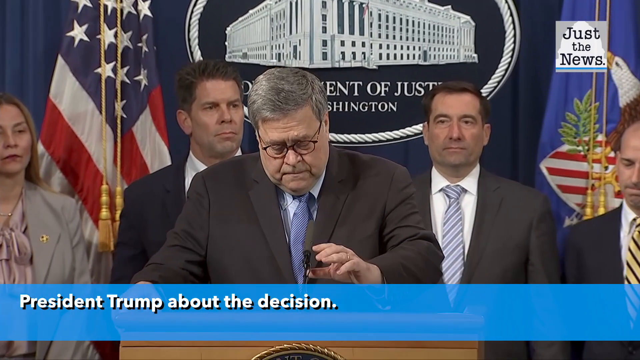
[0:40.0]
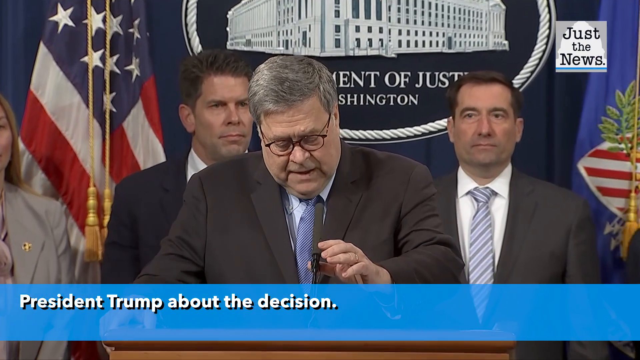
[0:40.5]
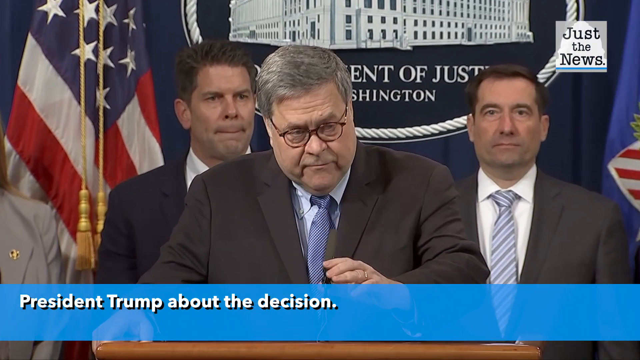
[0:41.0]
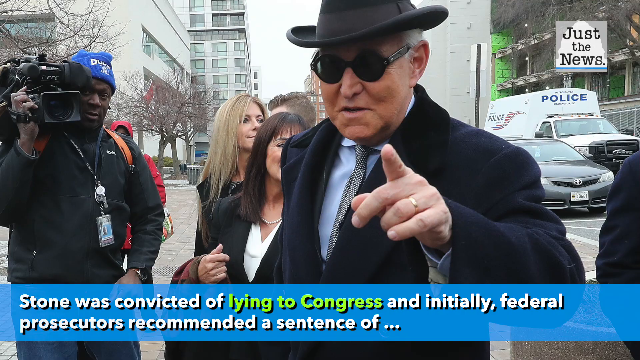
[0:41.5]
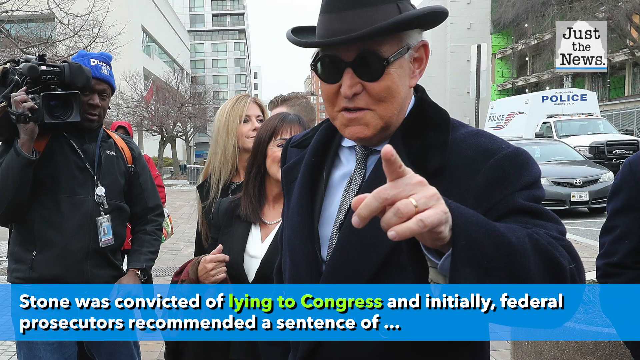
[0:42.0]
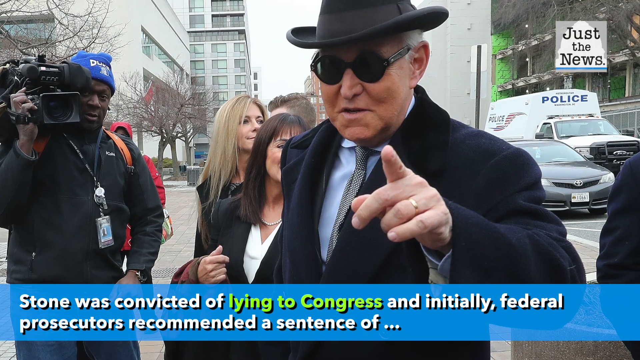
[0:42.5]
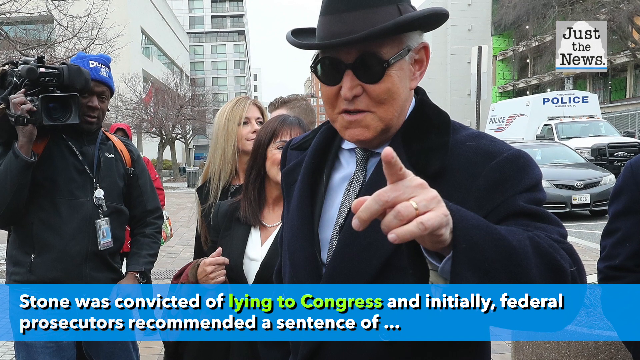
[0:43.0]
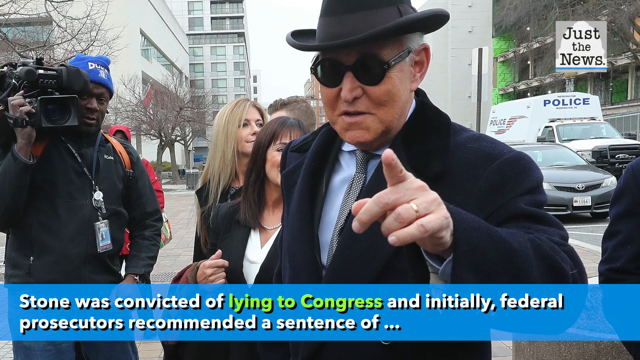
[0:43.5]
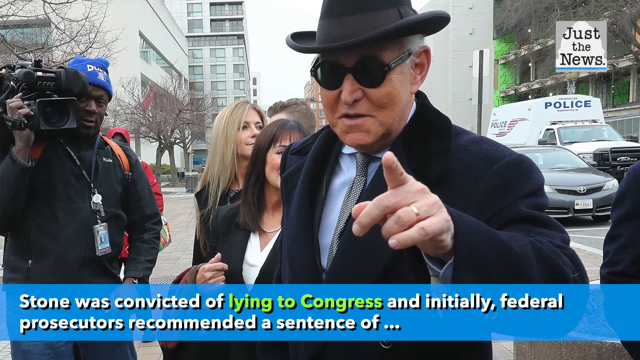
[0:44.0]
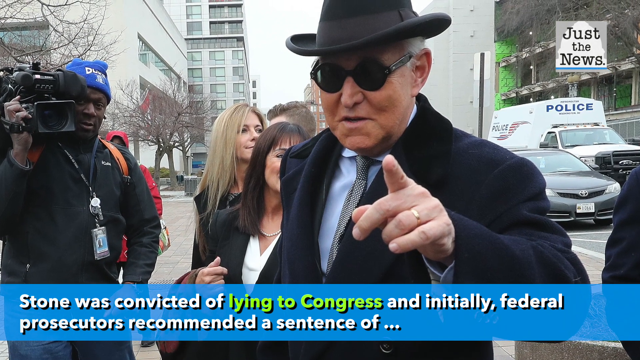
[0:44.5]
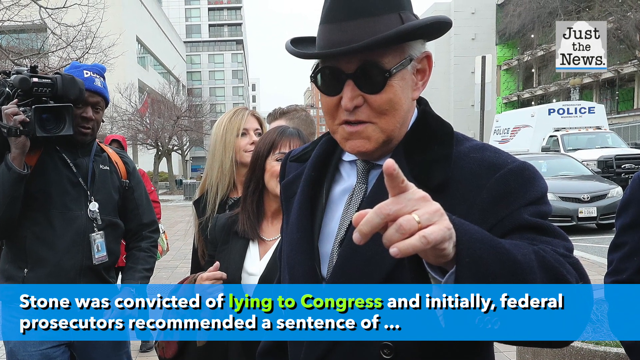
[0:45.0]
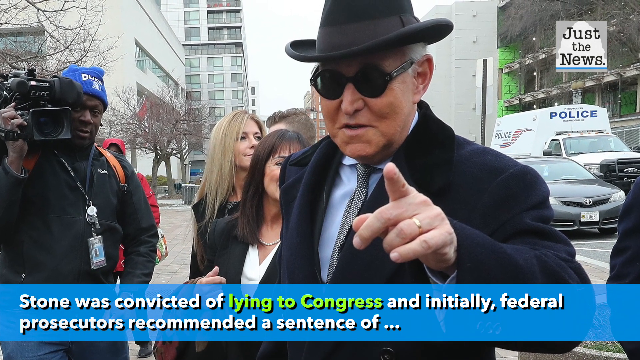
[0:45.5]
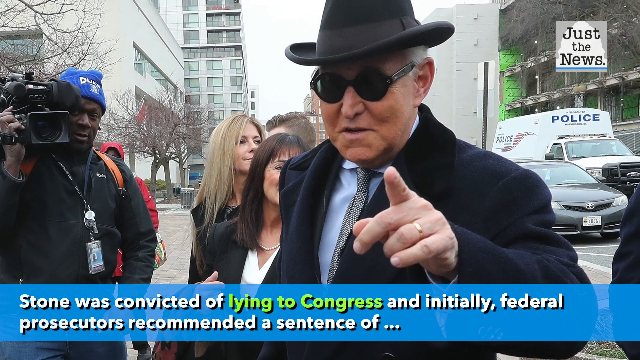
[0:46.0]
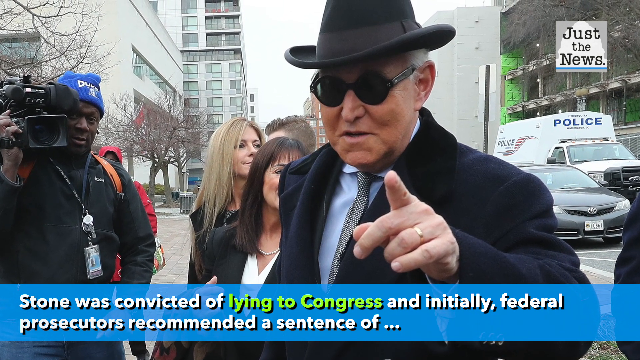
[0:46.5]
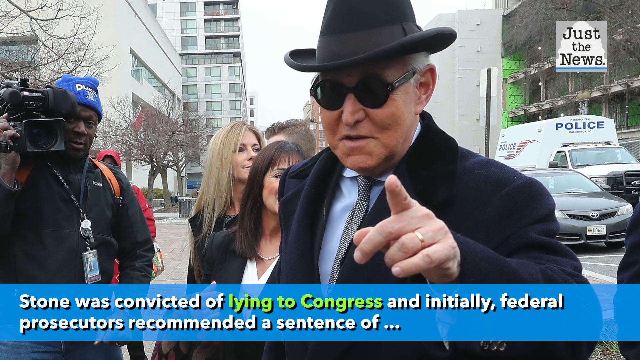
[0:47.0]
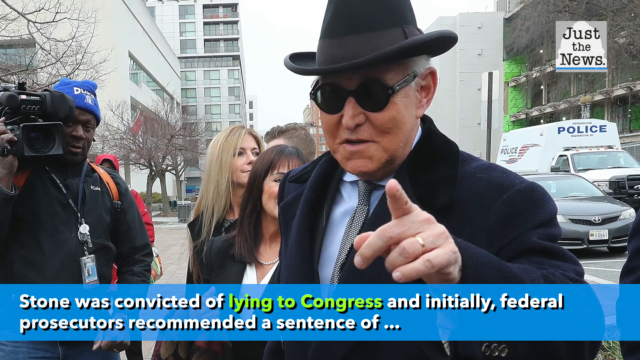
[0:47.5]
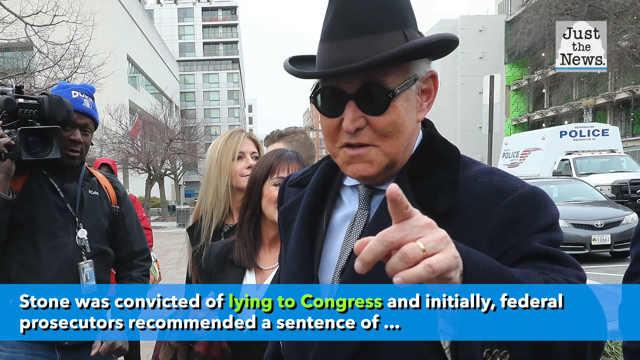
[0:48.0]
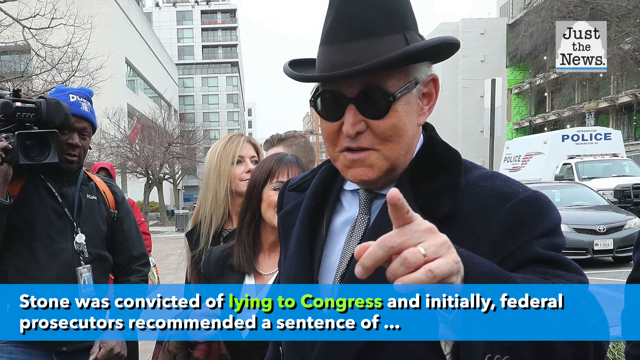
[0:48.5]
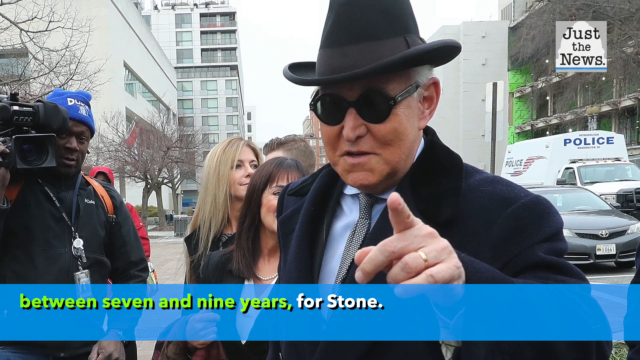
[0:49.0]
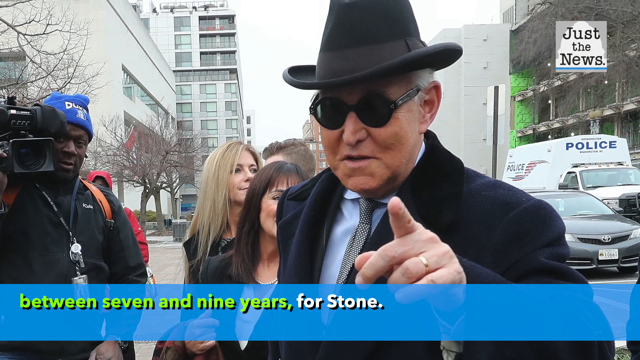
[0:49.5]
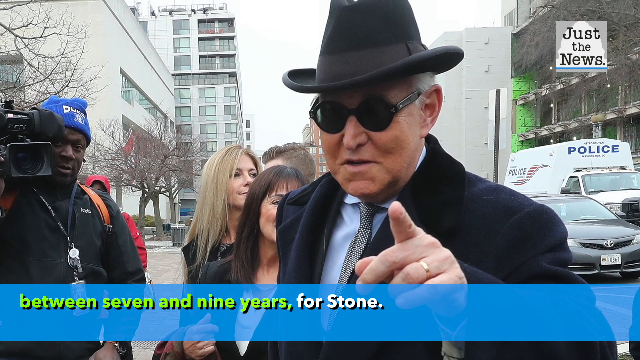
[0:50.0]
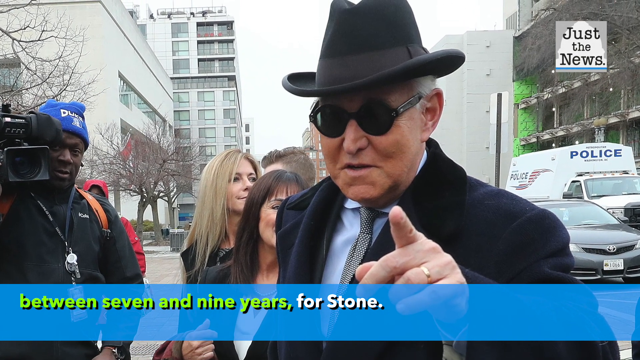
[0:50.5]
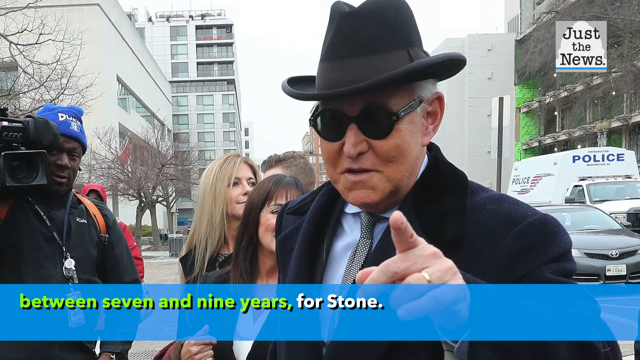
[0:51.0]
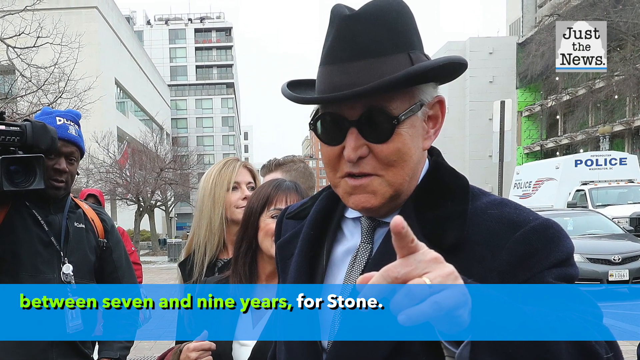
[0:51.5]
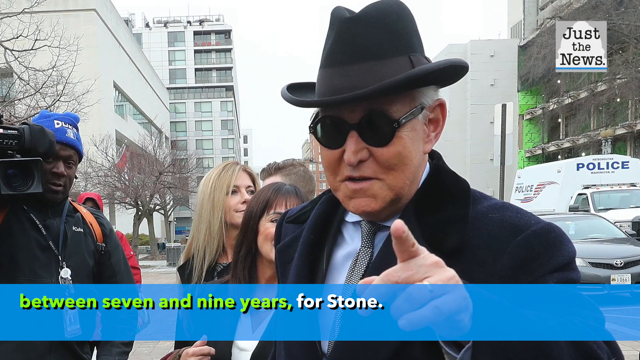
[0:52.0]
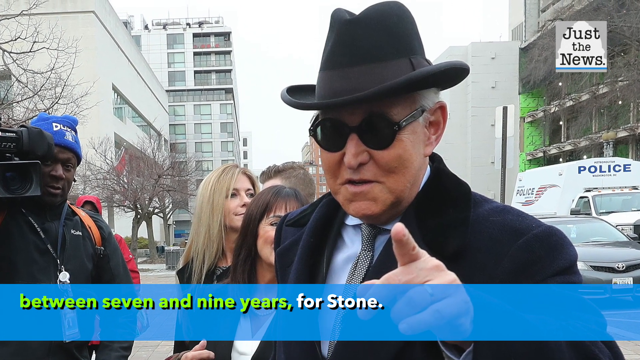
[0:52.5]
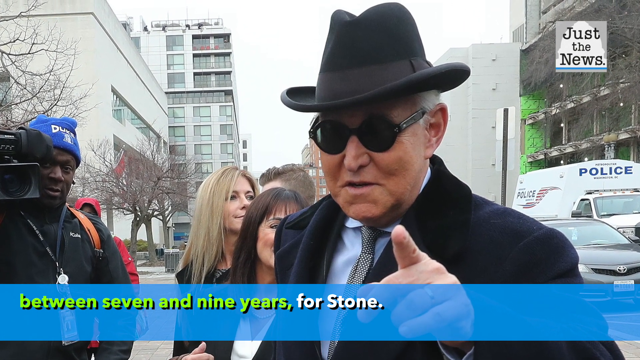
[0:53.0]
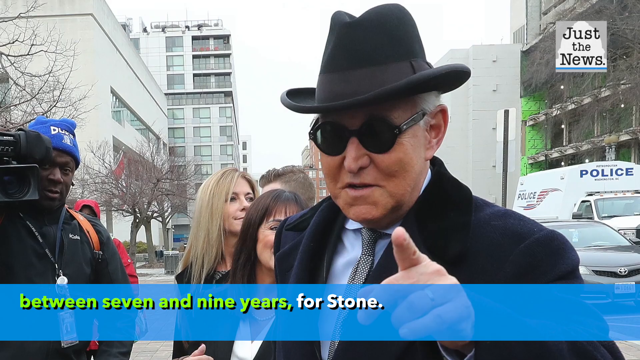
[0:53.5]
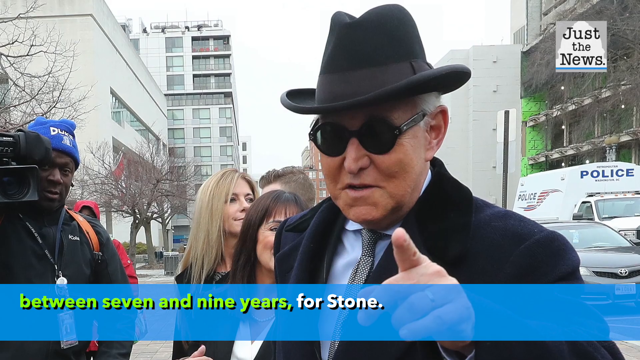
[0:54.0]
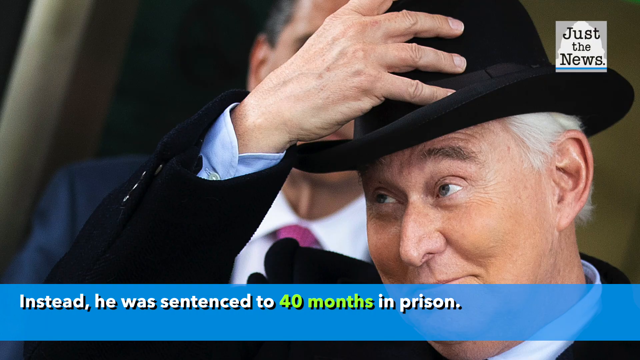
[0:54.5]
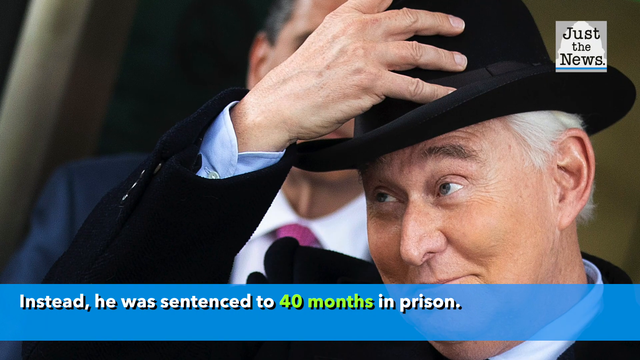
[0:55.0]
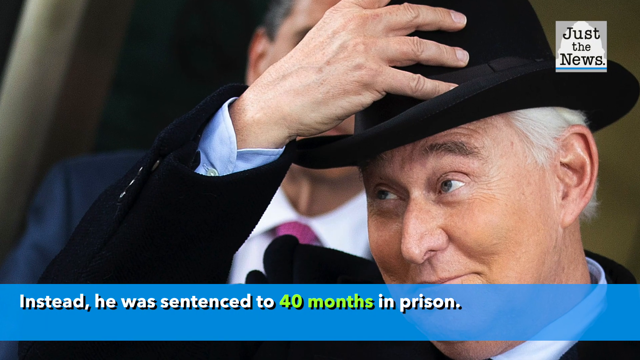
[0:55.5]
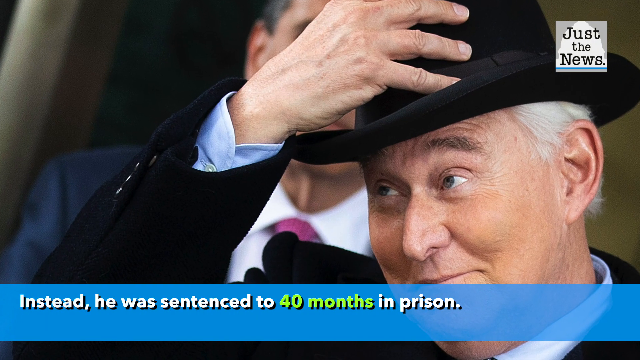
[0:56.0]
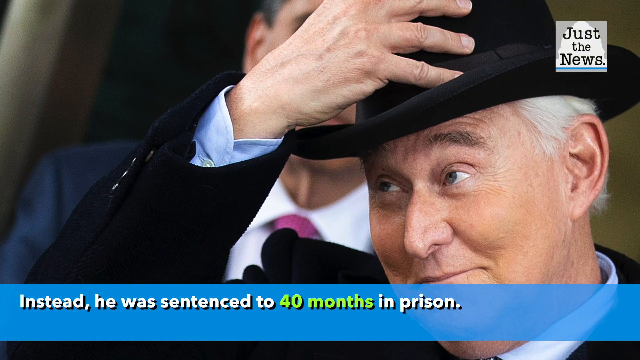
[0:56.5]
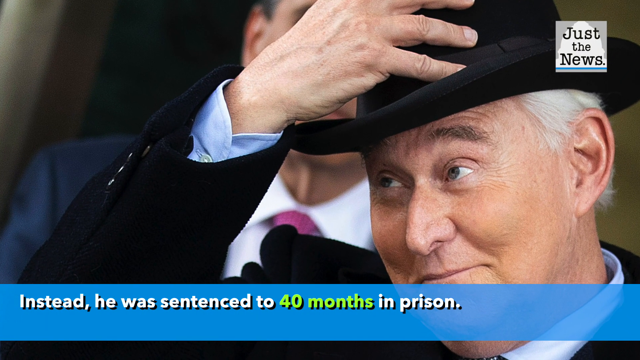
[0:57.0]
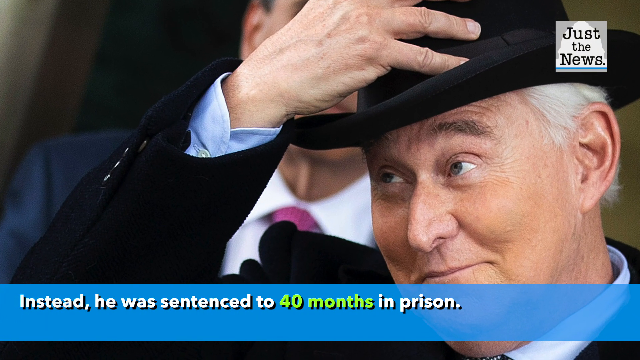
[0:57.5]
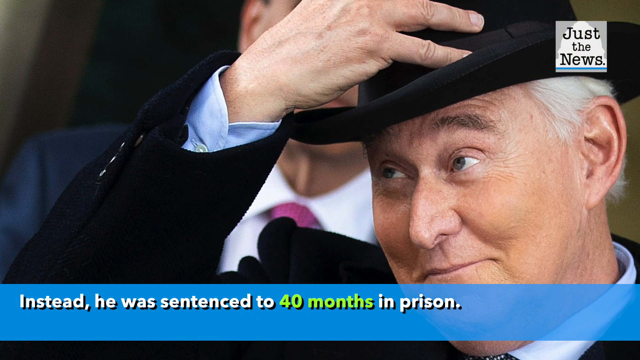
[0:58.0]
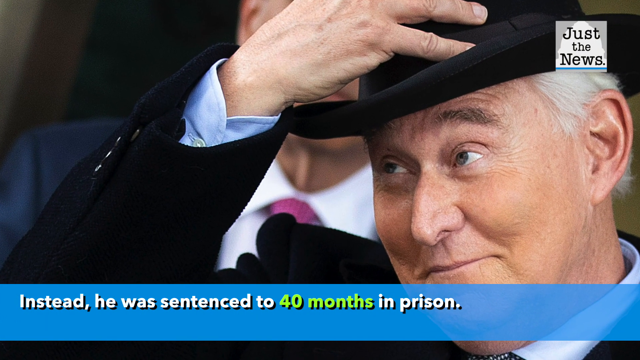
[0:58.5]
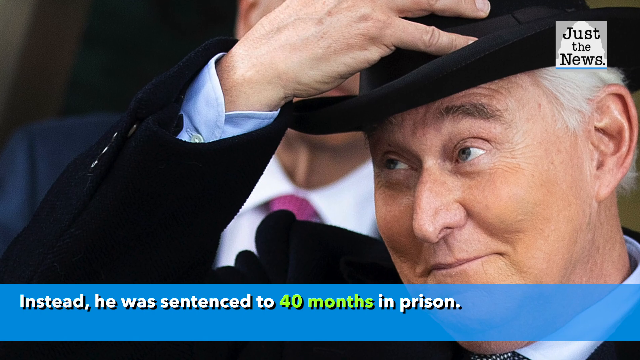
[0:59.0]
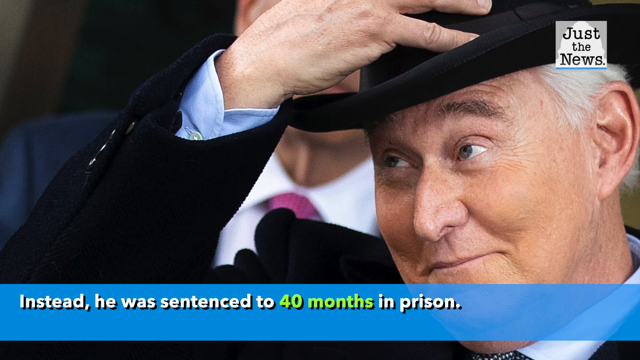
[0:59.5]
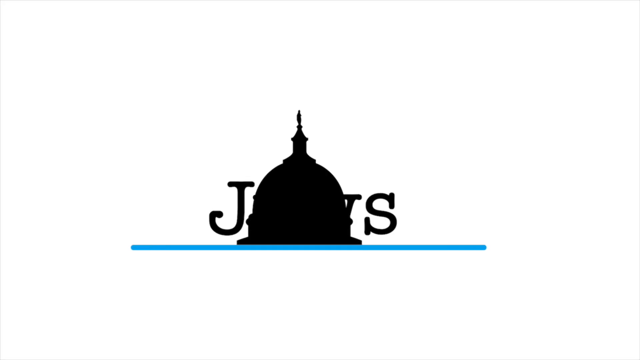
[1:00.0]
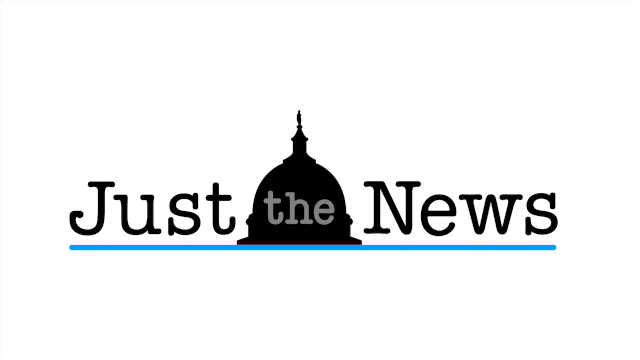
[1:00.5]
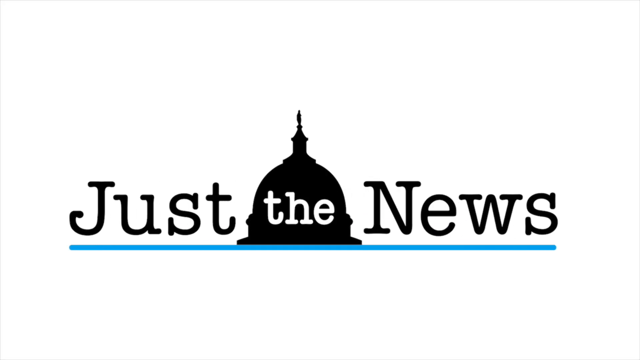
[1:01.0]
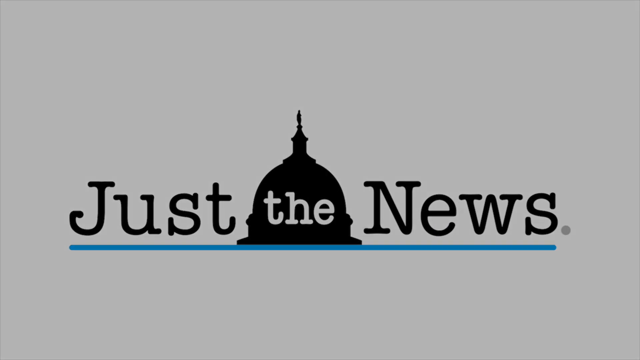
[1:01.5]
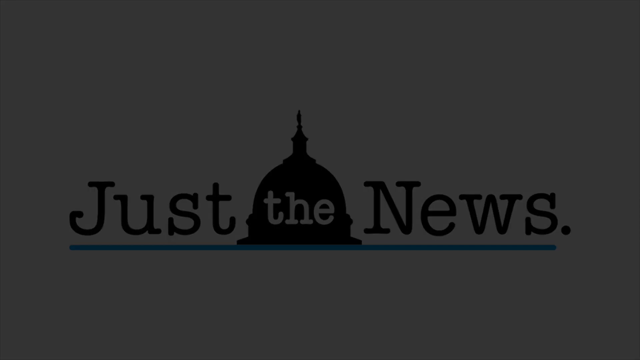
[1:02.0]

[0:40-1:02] The speaking man is seen briefly, then what looks like Roger Stone appears again, looking a little different: he wears a hat and dark glasses, and someone behind him holds a camera recording. These shots of him appear to be stills rather than live video. Text at the bottom of the screen says Stone was convicted of lying to Congress, that federal prosecutors initially recommended a sentence of between seven and nine years, and that he was sentenced to 40 months in prison. Stone holds a finger in the air, showing a ring that looks like a wedding ring. He has a little toothless smile on his face. In the top right corner is "just the news", and at the end the words "just the news" come up on the screen with an illustration of the Capitol.